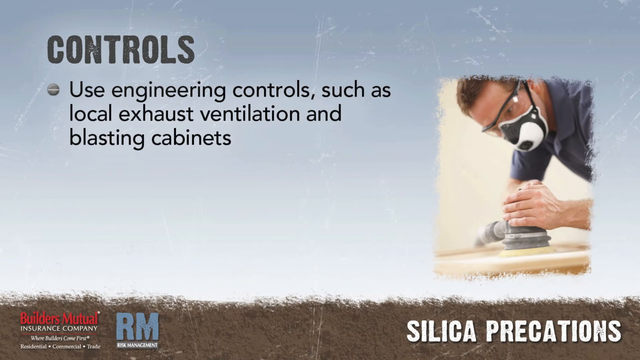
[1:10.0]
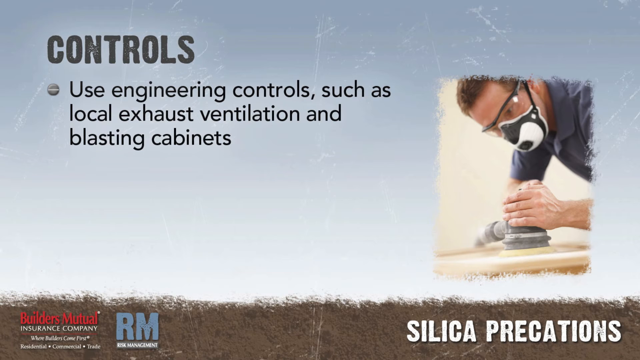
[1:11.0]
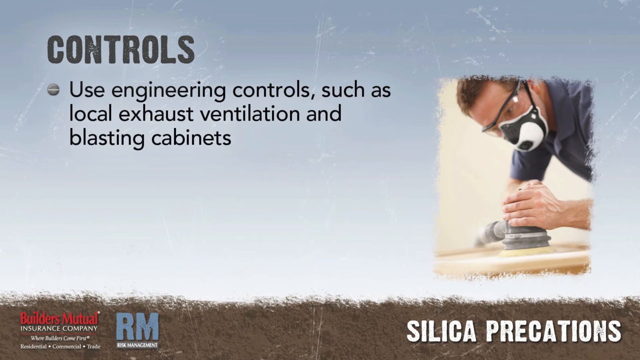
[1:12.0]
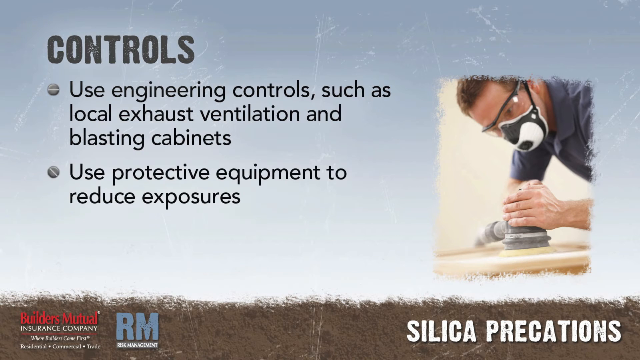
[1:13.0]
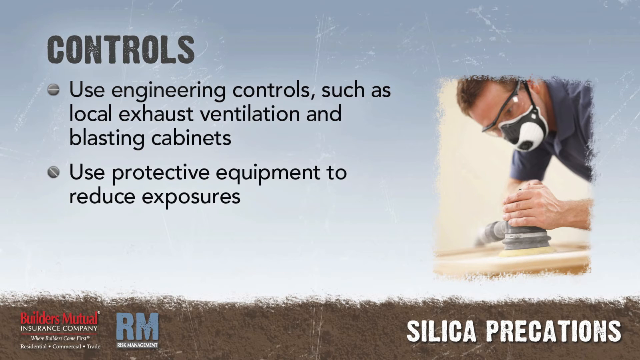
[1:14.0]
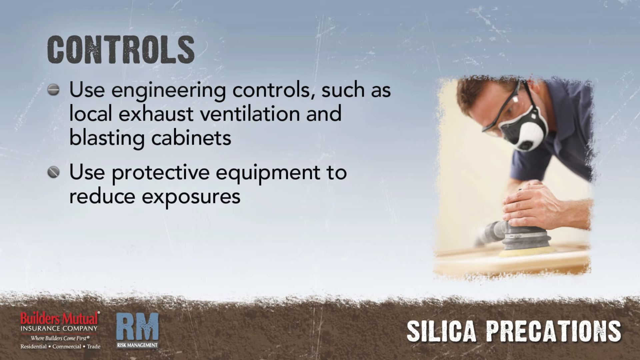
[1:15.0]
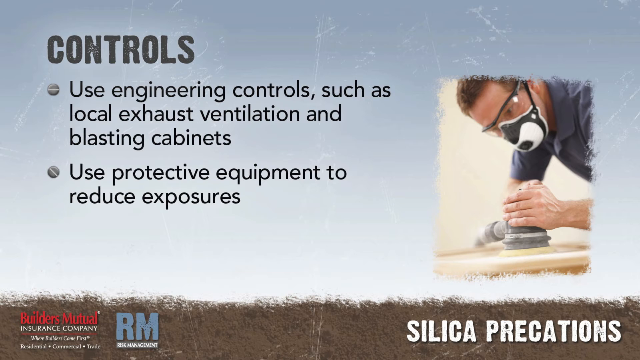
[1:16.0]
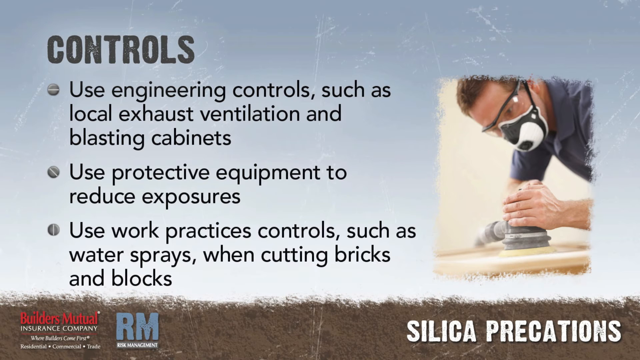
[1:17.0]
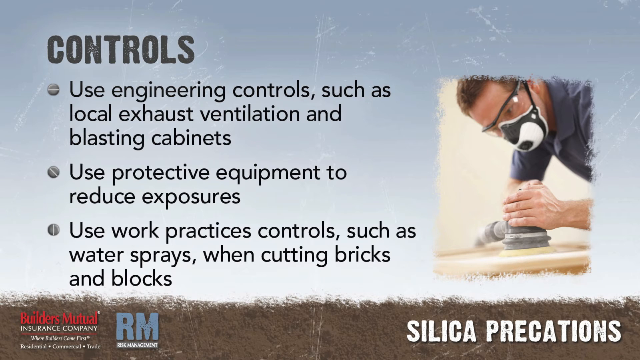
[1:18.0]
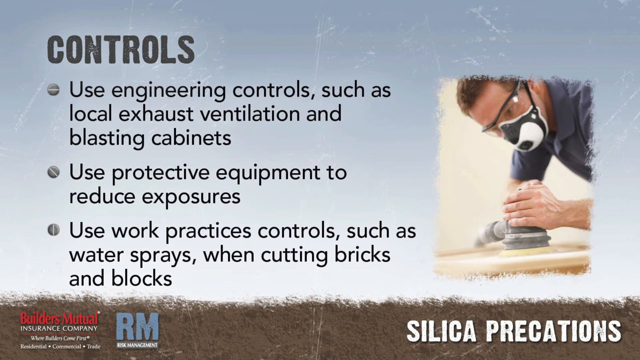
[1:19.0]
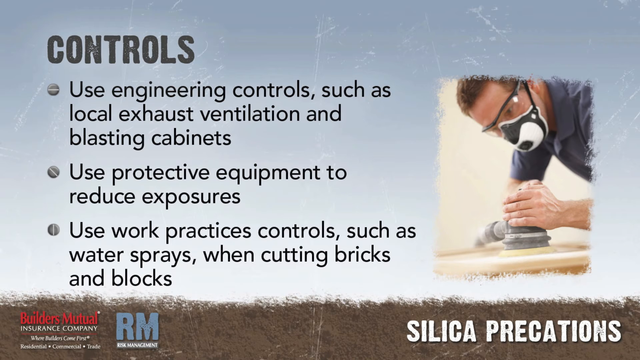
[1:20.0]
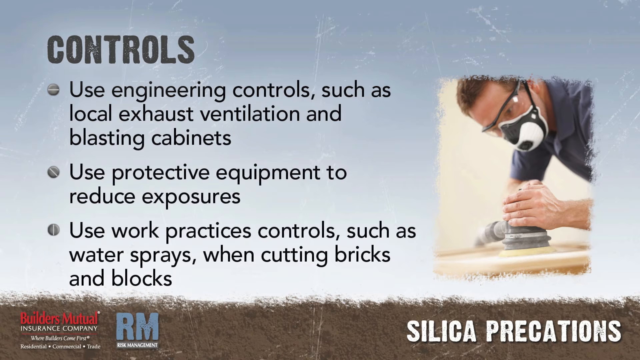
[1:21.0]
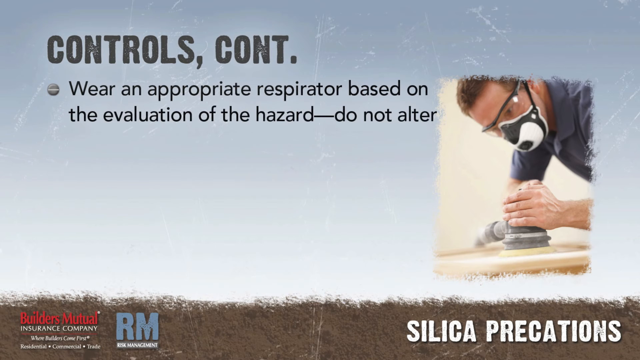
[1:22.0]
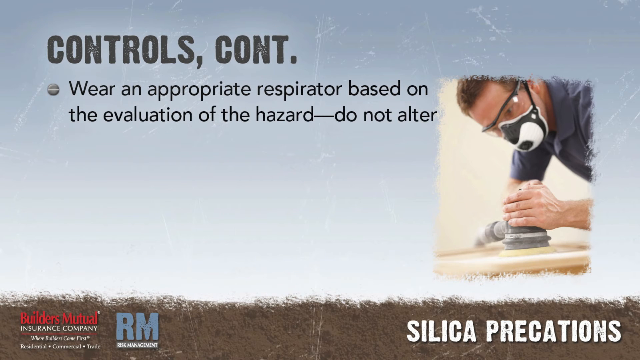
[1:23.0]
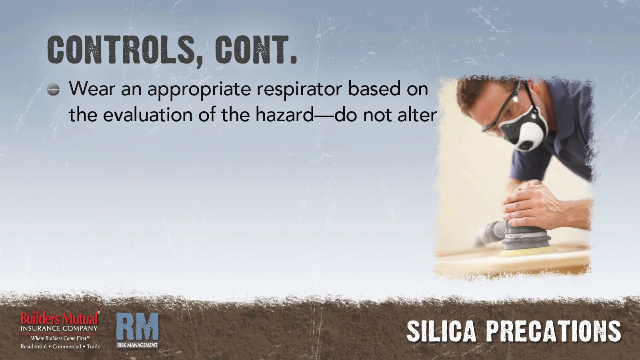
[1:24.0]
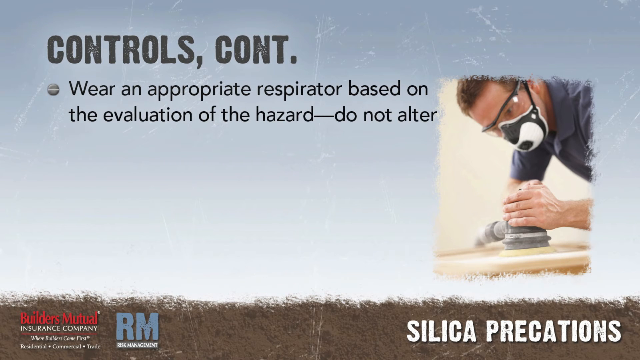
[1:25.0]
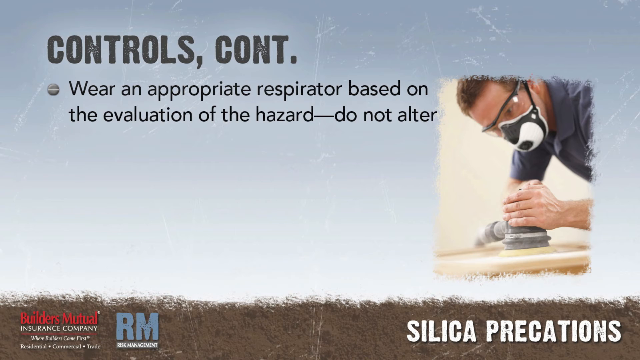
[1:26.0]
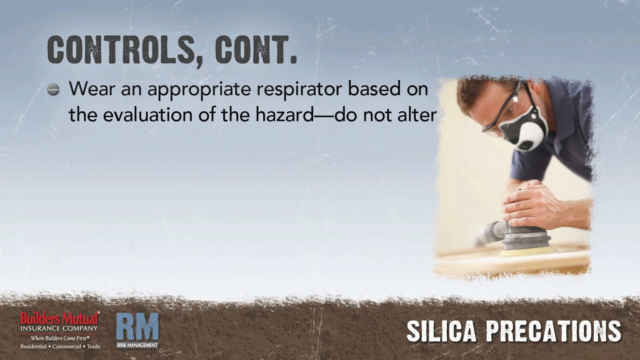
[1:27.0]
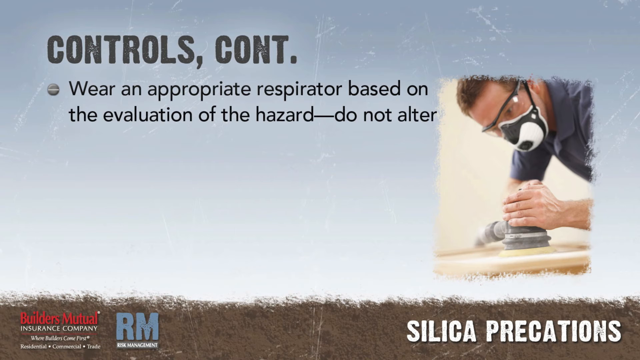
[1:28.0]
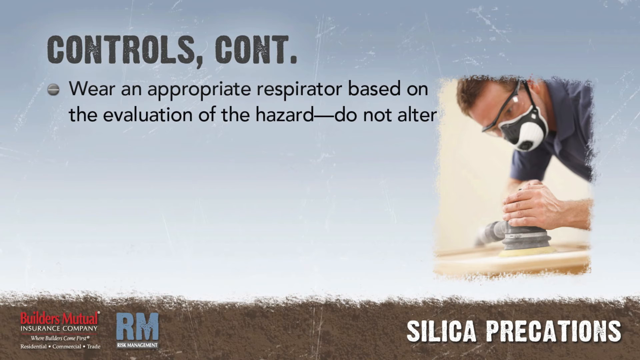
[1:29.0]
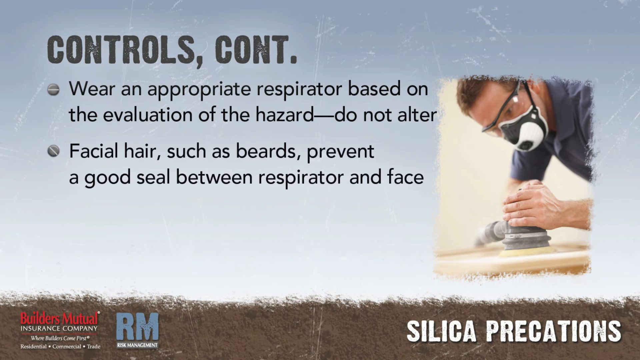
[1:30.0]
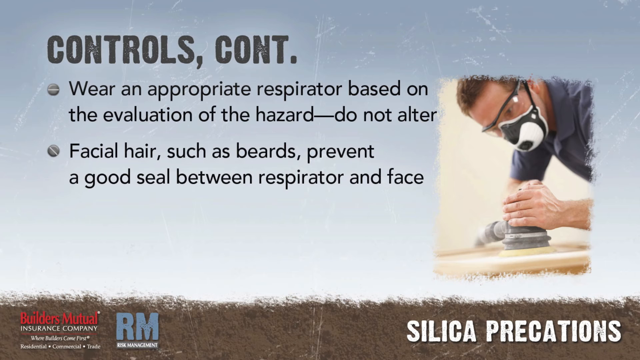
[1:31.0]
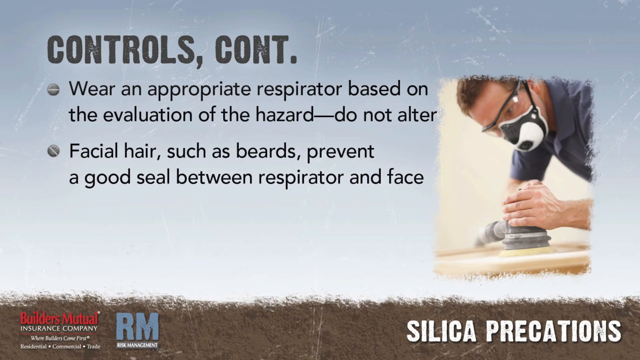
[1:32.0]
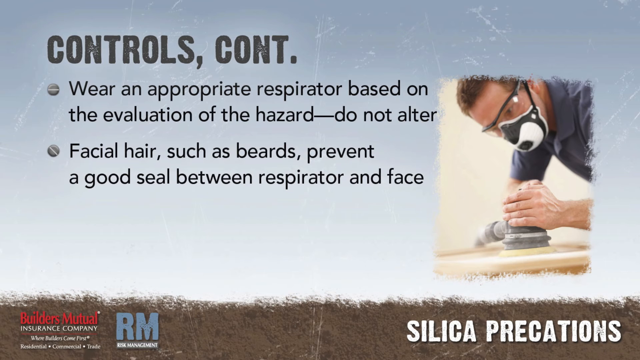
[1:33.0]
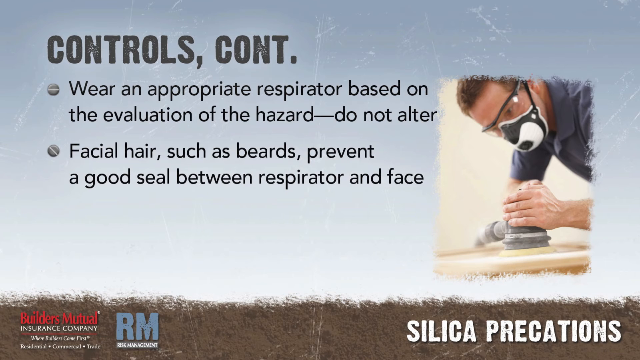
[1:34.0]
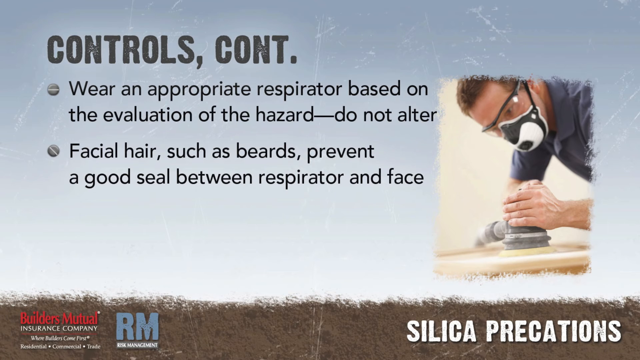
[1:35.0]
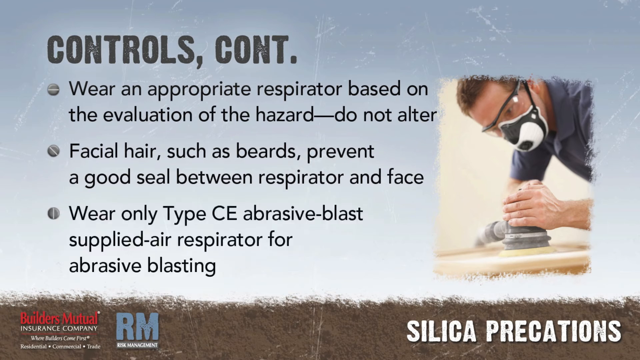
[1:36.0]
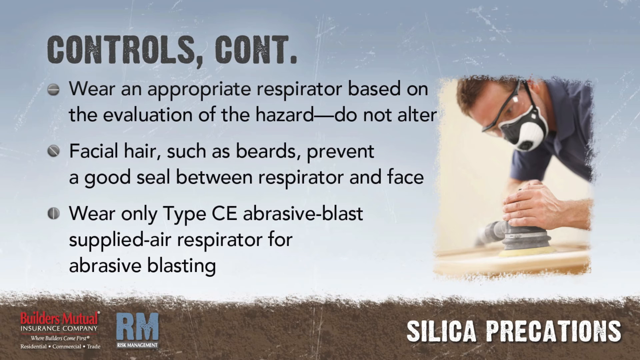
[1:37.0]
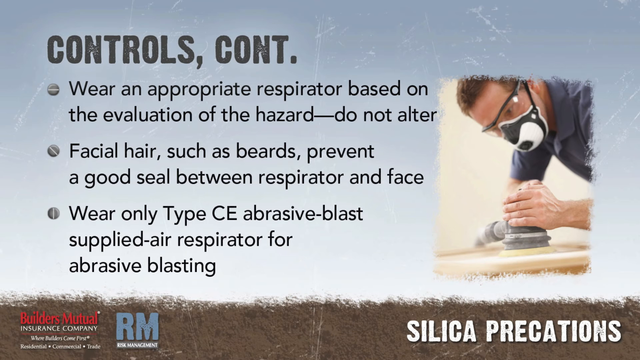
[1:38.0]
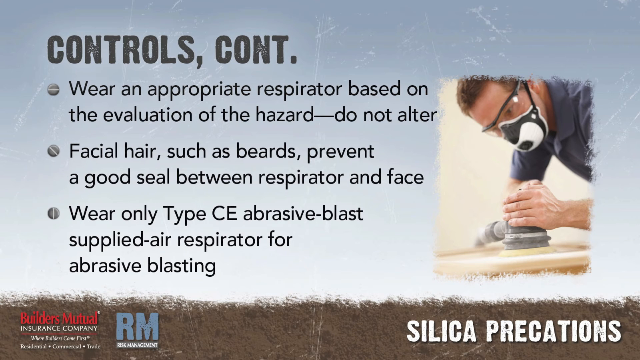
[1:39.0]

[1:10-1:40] A second bullet point forms: "Use protective equipment to reduce exposures." A third forms below it: "Use work practices controls such as water sprays when cutting bricks and blocks." On the right side, a man uses a sander to smooth out a piece of wood, holding and operating the sanding machine with his left hand; he wears safety glasses and a black and white face mask over his nose and mouth. The header then changes to "Controls continued", and bullet points form one after another: "Wear an appropriate respirator based on the evaluation of the hazard. Do not alter.", then "Facial hair, such as beards, prevent a good seal between respirator and face.", and finally at the bottom "Wear only type CE abrasive blast supplied air respirator for abrasive blasting."